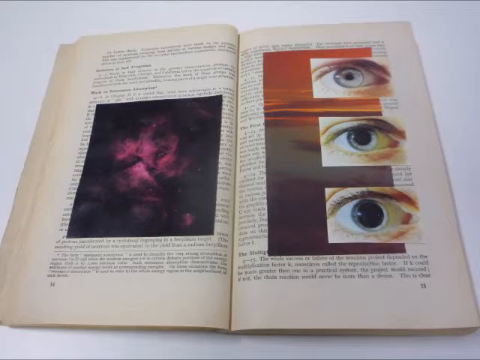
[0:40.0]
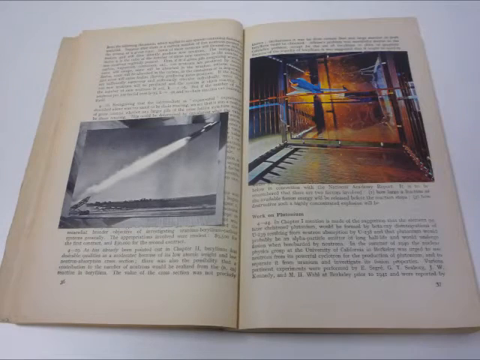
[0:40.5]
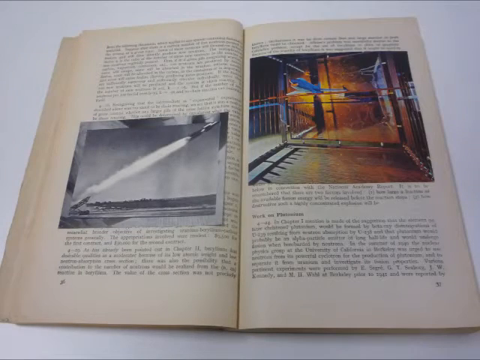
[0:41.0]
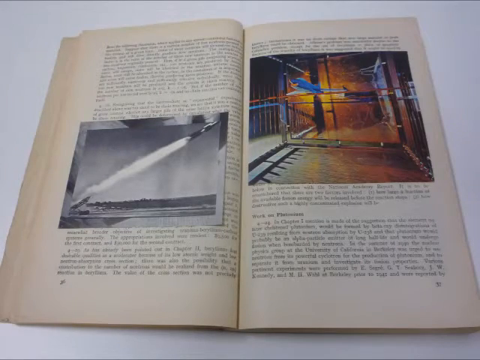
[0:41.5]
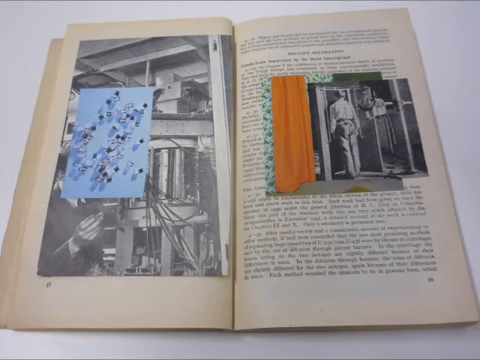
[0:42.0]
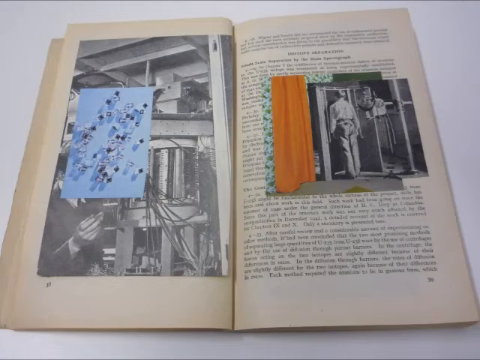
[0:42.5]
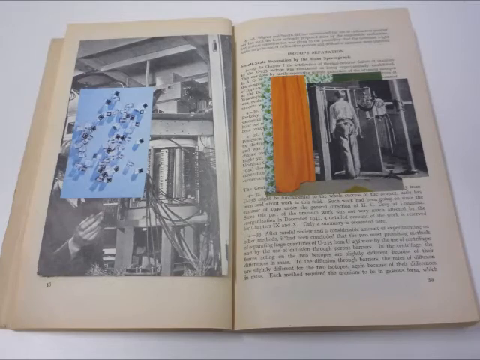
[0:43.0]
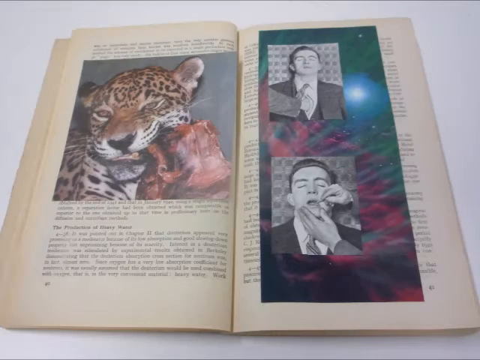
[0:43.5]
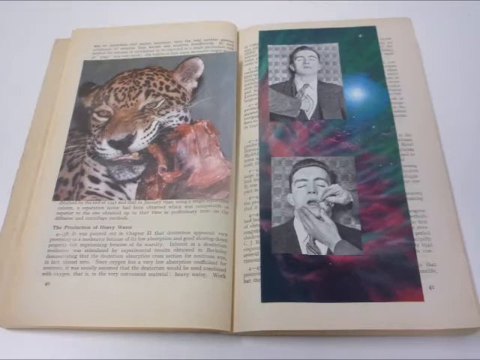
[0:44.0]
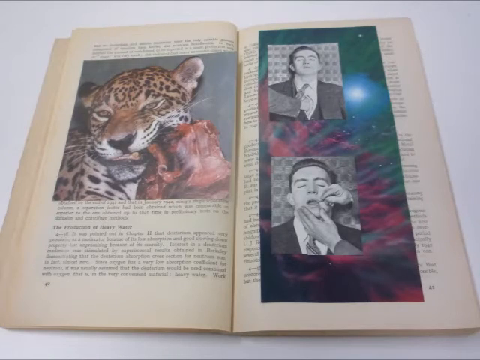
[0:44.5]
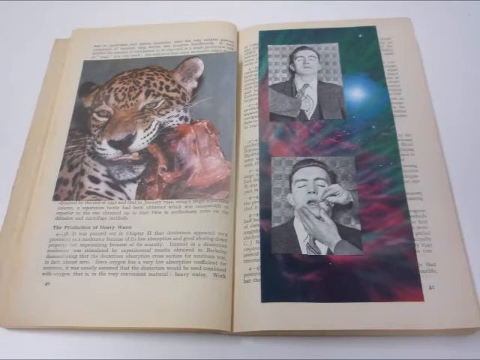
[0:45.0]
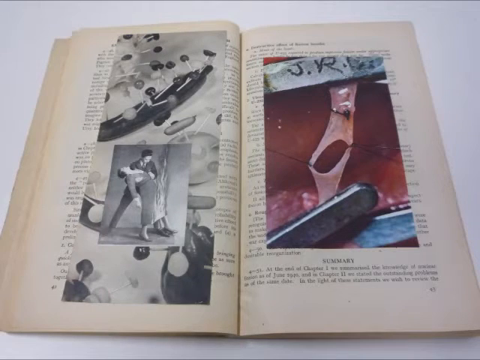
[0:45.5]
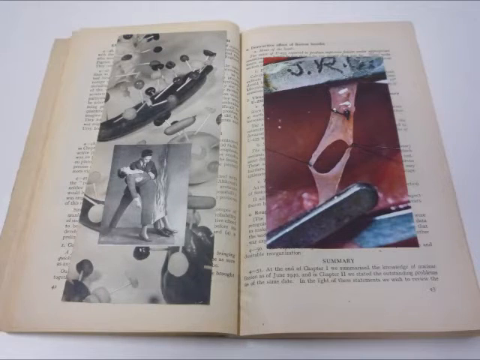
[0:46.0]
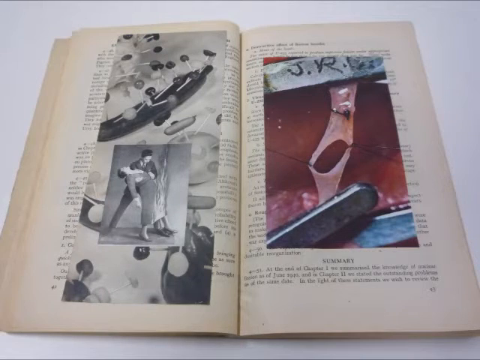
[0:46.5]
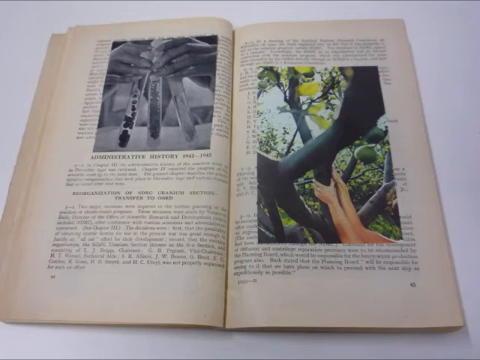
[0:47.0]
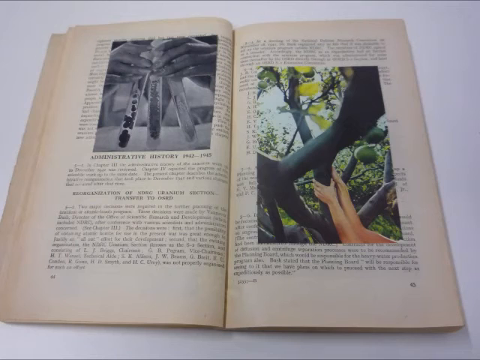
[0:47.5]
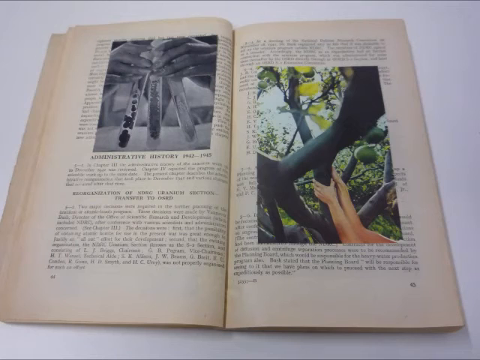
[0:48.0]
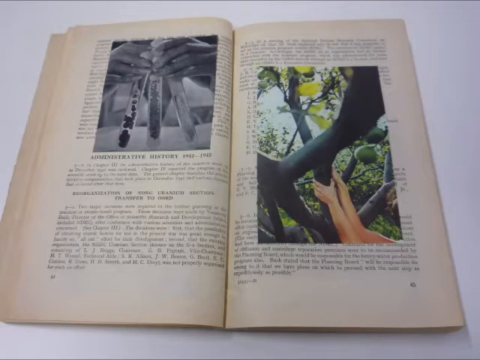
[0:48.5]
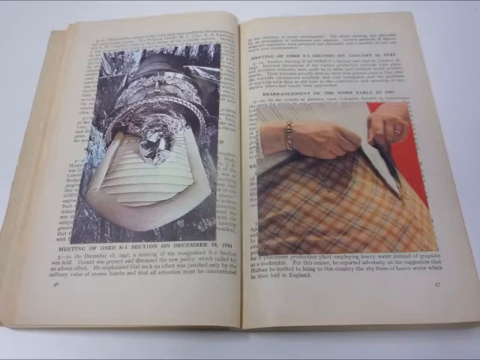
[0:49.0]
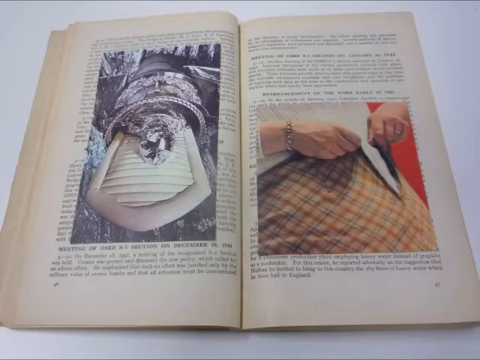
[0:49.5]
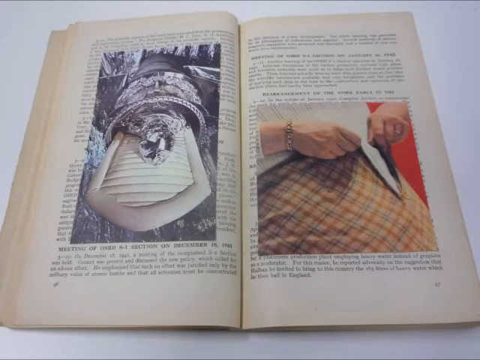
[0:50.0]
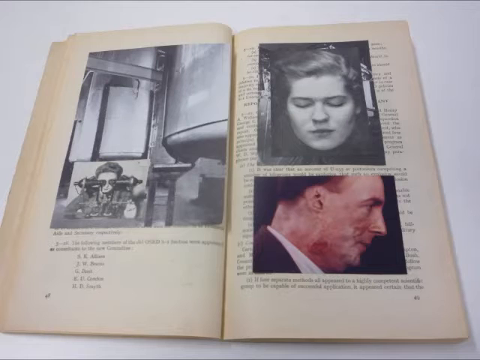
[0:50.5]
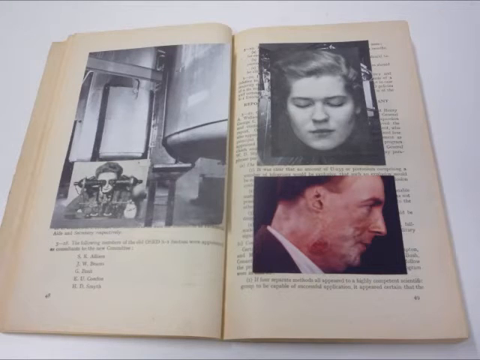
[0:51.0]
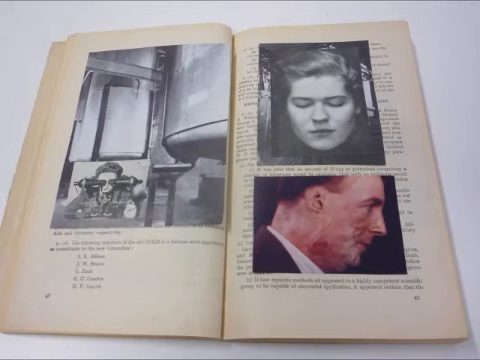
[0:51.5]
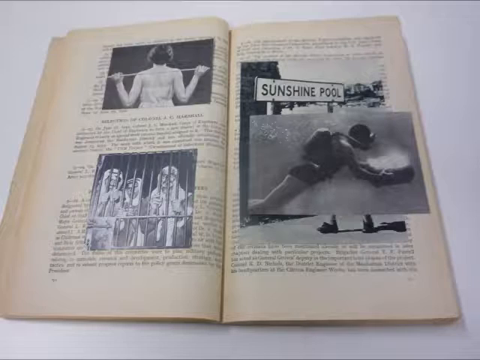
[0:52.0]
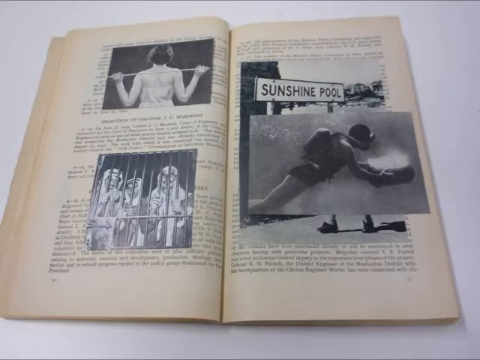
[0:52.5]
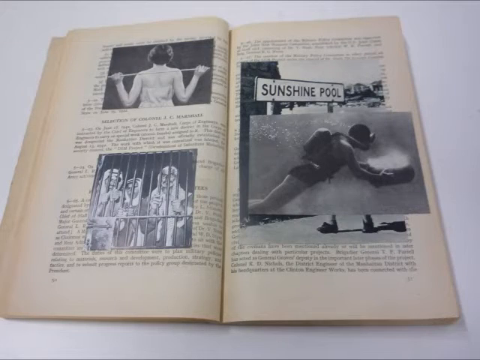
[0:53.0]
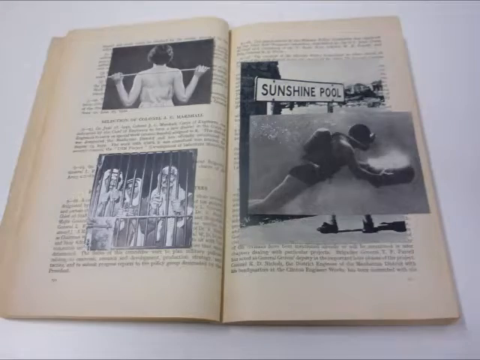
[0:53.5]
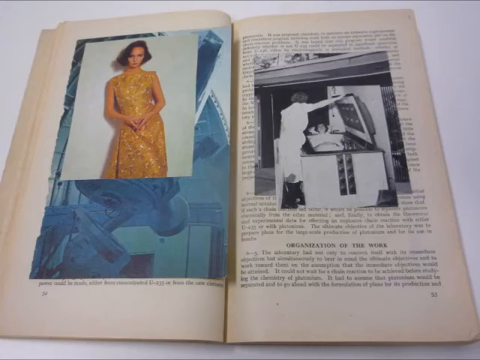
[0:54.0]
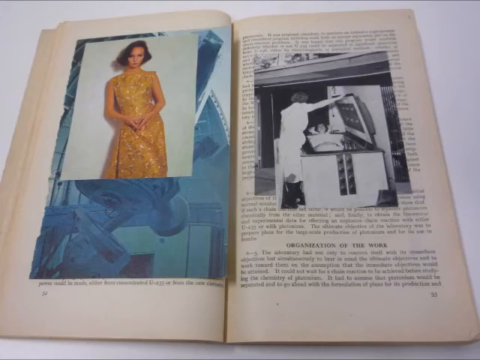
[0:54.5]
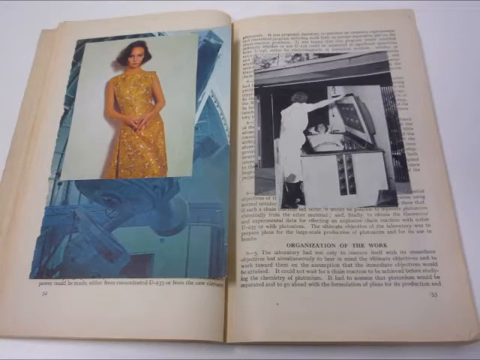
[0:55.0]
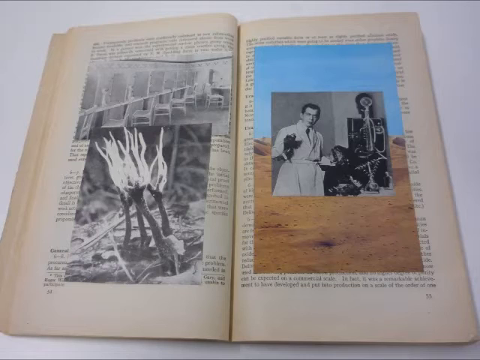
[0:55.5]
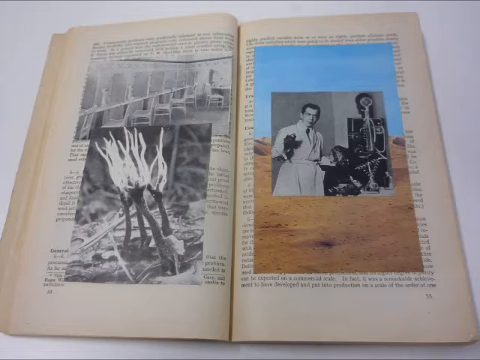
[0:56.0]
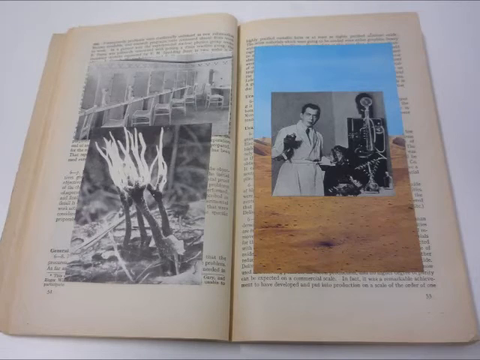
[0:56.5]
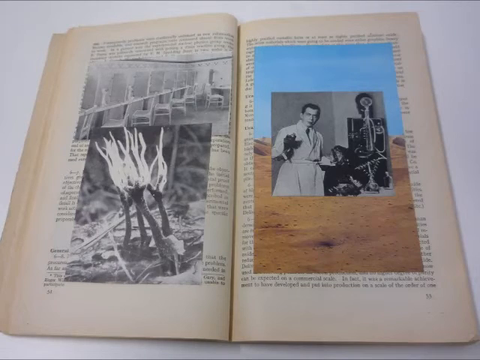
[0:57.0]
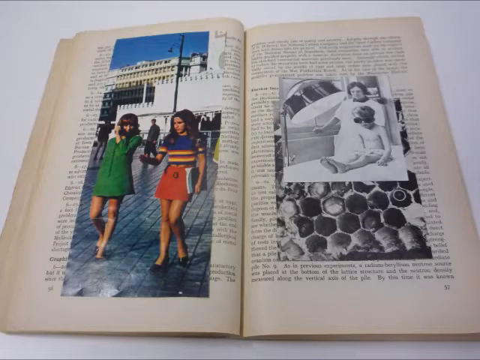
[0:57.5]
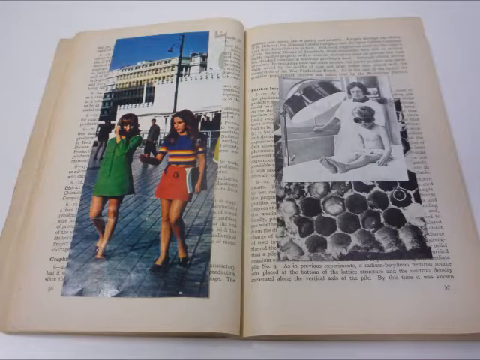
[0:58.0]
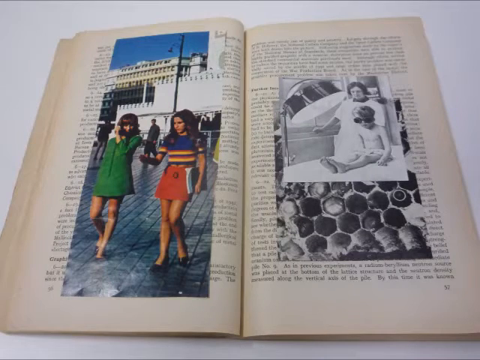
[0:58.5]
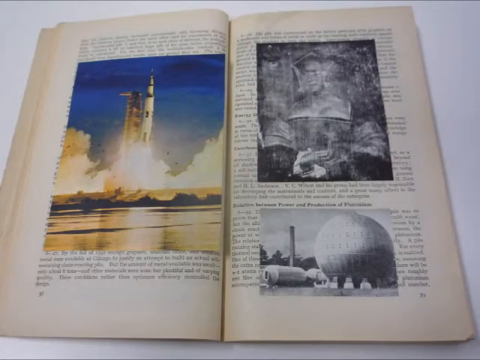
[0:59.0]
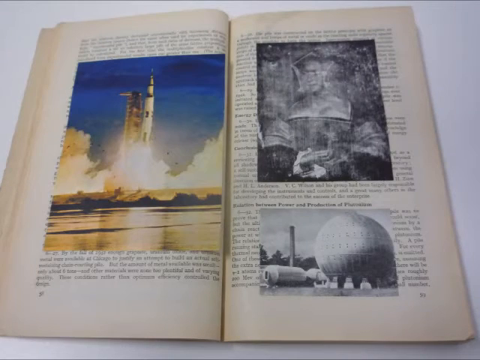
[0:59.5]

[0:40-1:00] The inside of the atomic energy leaflet, reprinted in 1945, shows pages yellowing around the edges and some of the binding coming slightly loose. The content appears to be lots of printed black text alongside some photographs, plus additional photographs that seem to have just been placed inside the leaflet, possibly to keep them flat and safe from damage. There are photos of what look like scientific experiments alongside more random things: what looks like a leopard eating a piece of meat, a man who is potentially at the dentist, colour images that look like somebody climbing a tree, and pictures of things in three test tubes. A few show women exercising, swimming and walking around, with fashion that looks later than 1945, probably from the 1960s.